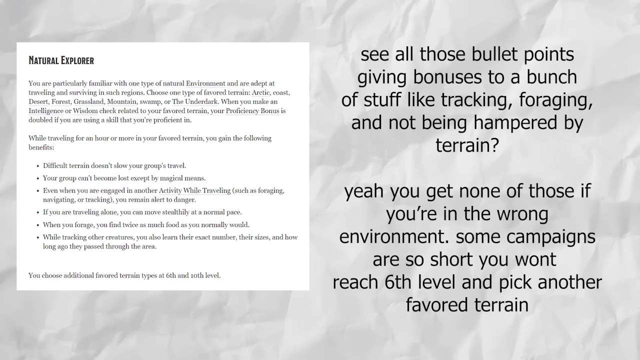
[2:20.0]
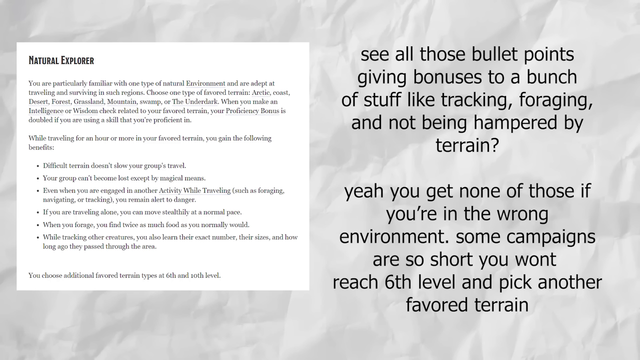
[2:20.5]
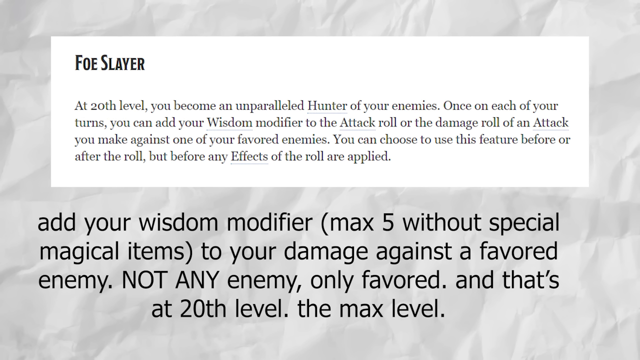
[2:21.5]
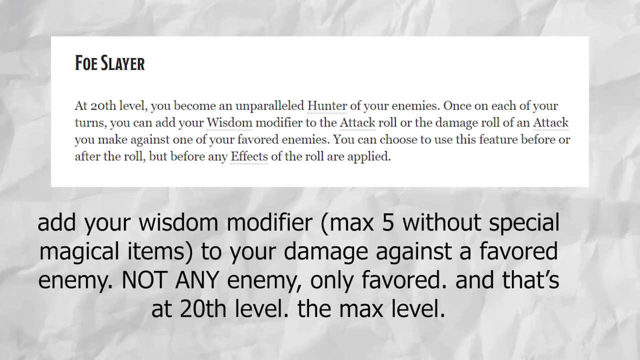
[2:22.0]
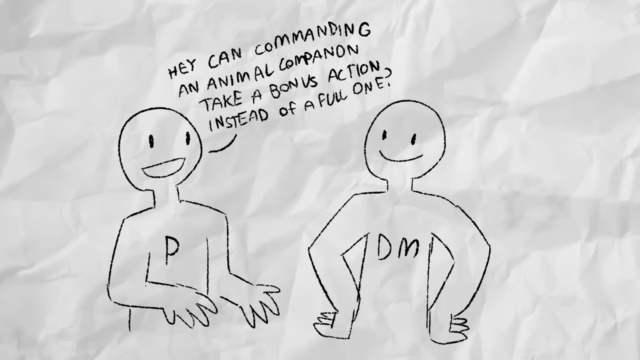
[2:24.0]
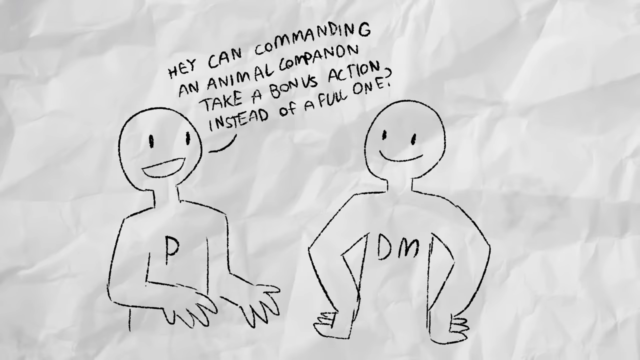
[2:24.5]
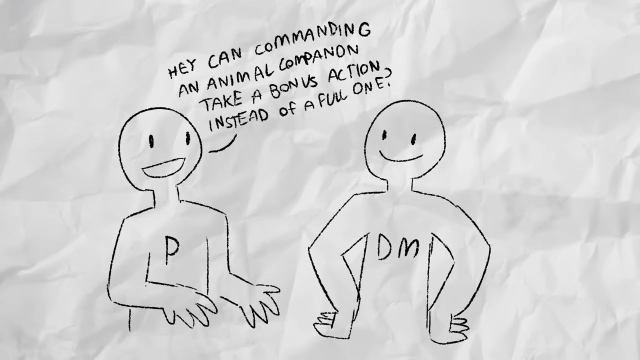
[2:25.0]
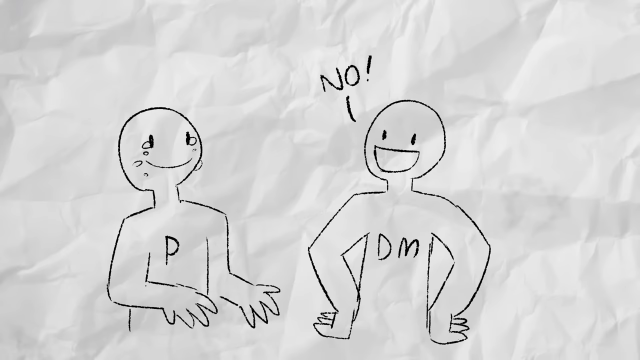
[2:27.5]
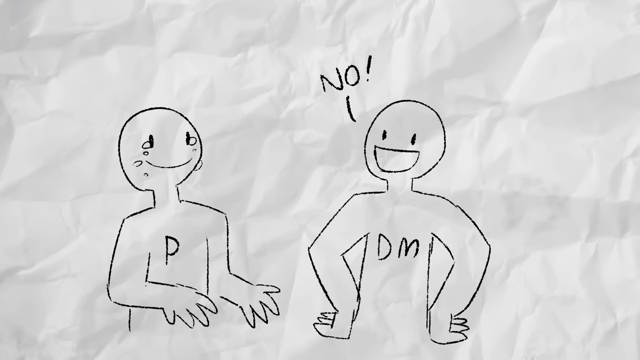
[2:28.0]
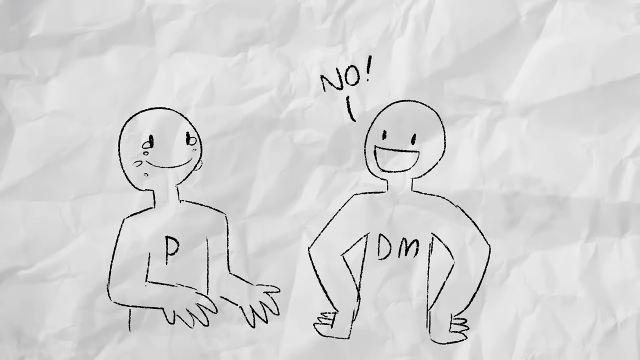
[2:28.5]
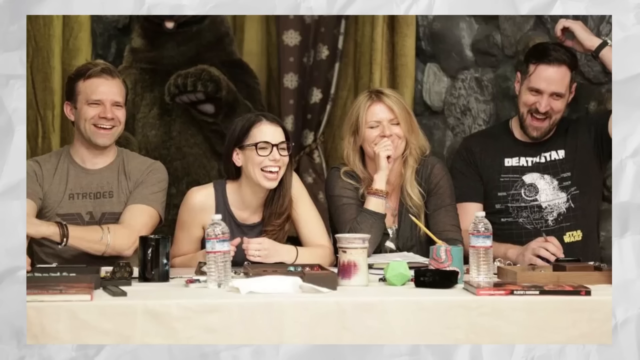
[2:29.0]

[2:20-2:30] A piece of text is displayed, beginning "natural explorer": "You are particularly familiar with one type of natural environment and are adept at traveling and surviving in such regions." It continues "Choose one type of favored terrain" and "When you make an intelligence or wisdom check related to your favored terrain your proficiency bonus is doubled if you're using a skill that you're proficient in." Further lines include "your groups can't become lost except by magical means" and "if you are traveling alone you can move stealthily at a normal pace."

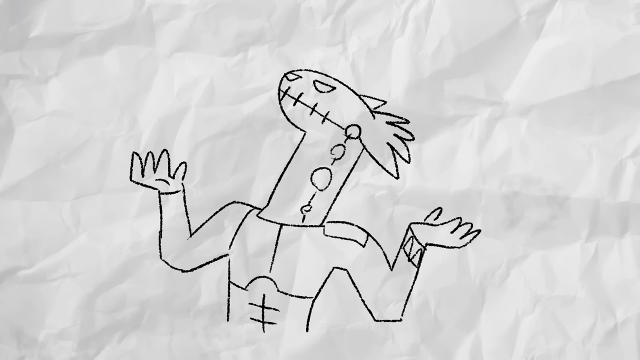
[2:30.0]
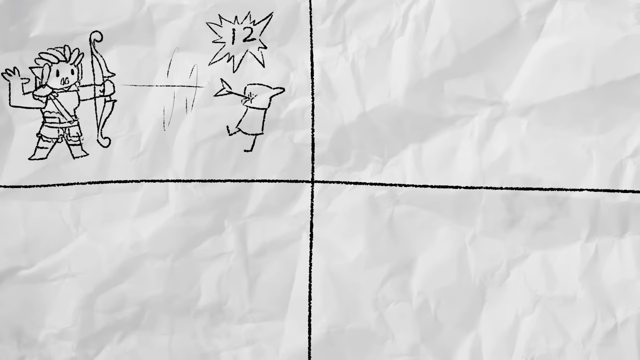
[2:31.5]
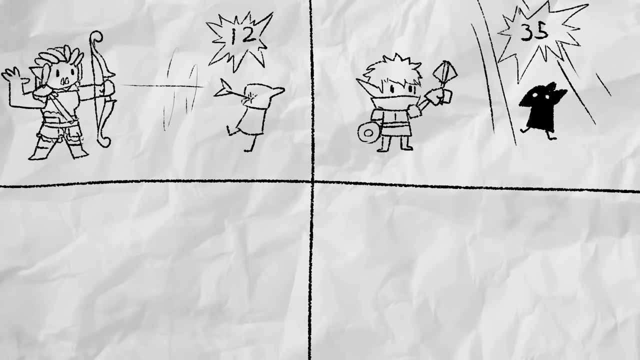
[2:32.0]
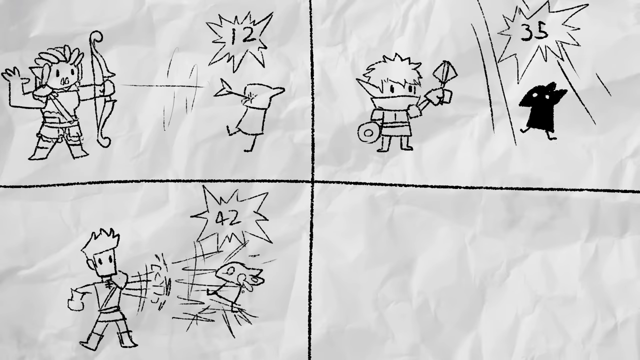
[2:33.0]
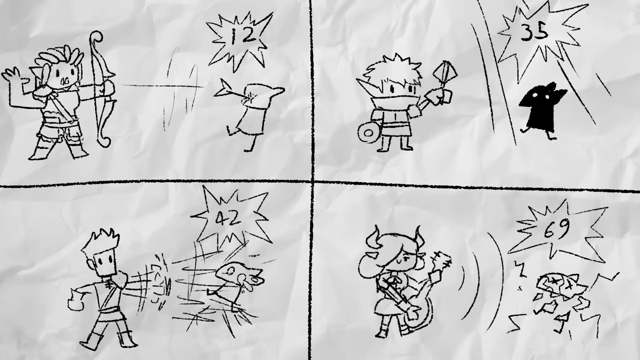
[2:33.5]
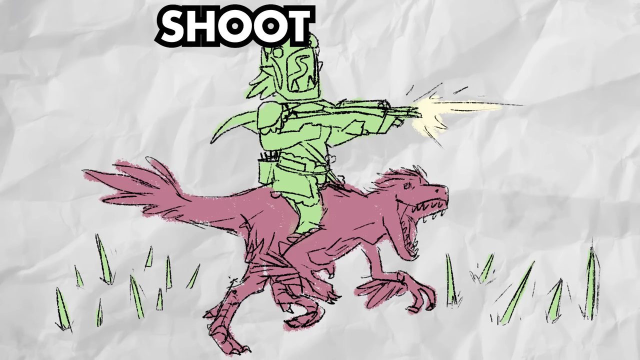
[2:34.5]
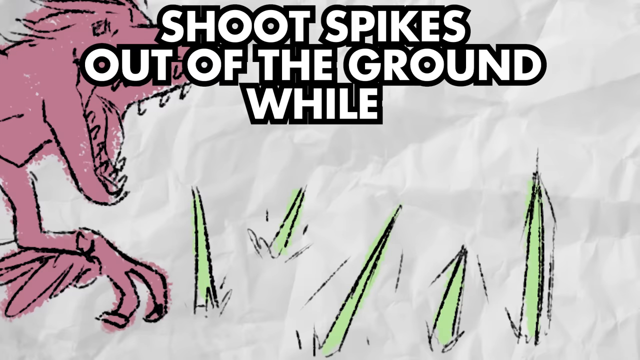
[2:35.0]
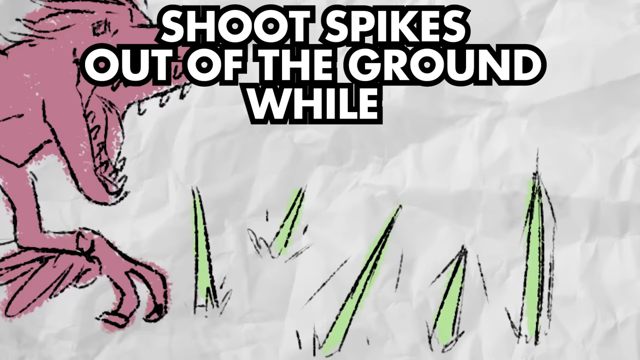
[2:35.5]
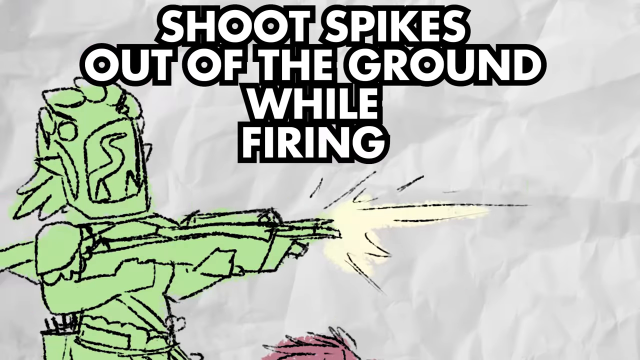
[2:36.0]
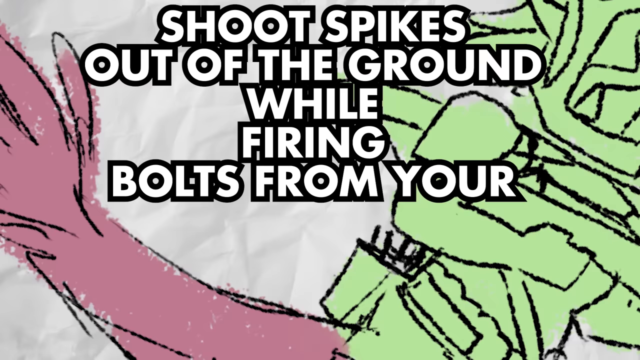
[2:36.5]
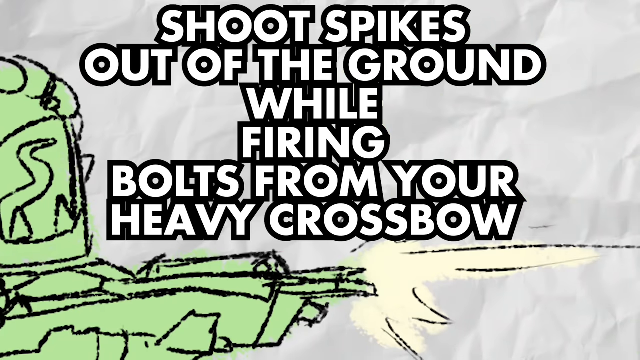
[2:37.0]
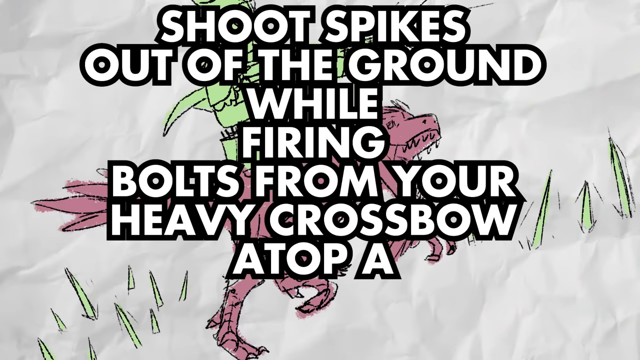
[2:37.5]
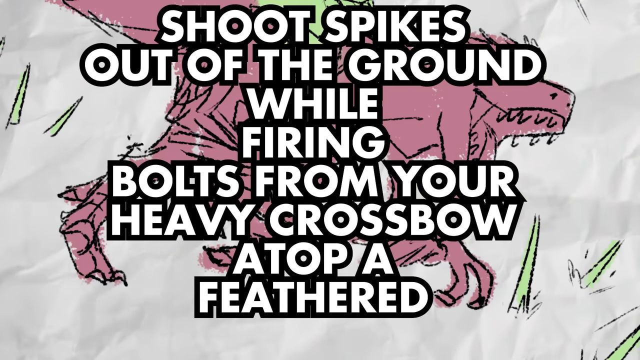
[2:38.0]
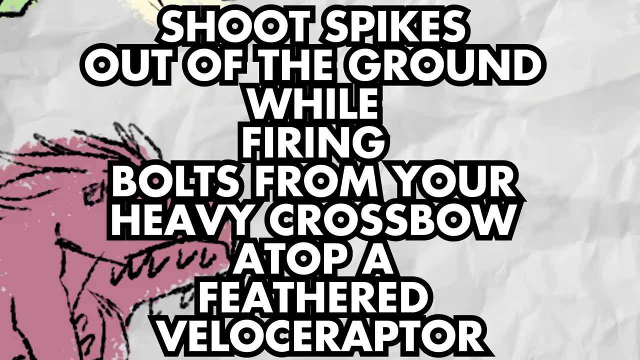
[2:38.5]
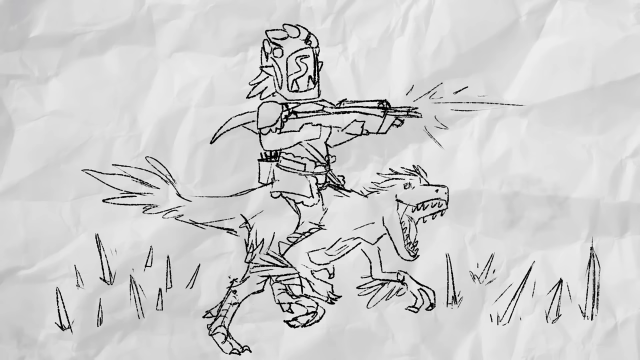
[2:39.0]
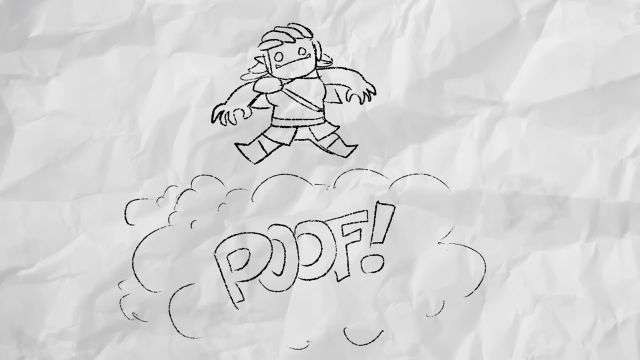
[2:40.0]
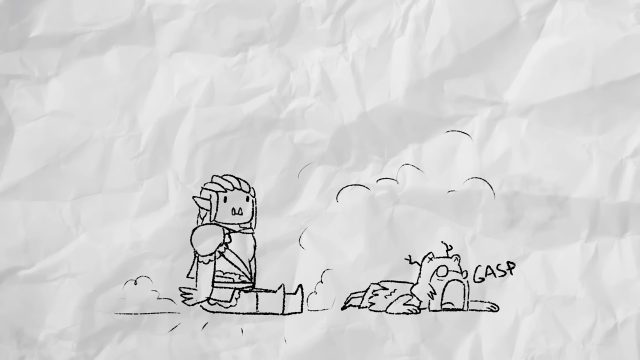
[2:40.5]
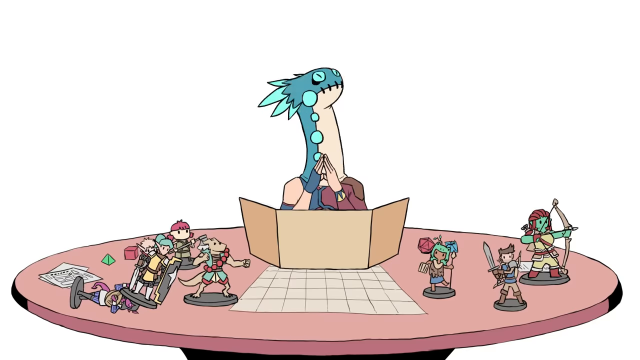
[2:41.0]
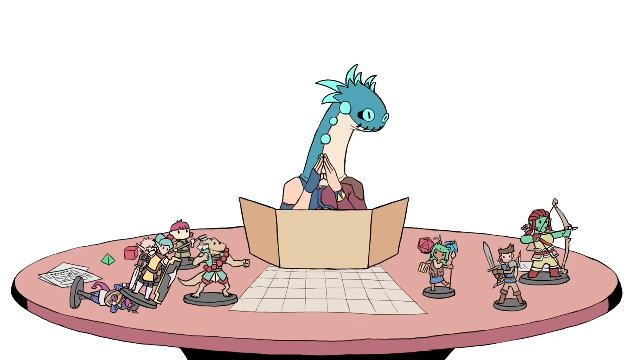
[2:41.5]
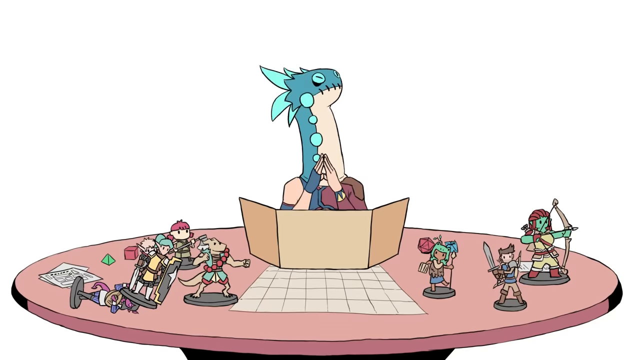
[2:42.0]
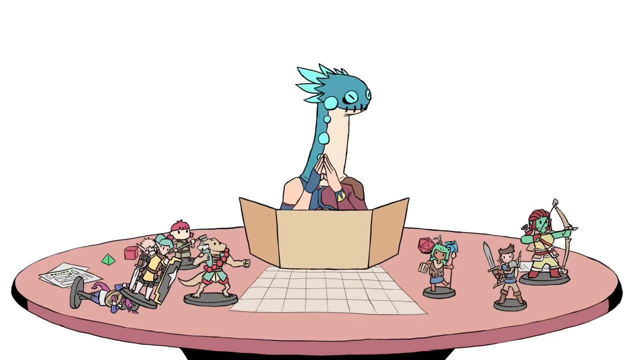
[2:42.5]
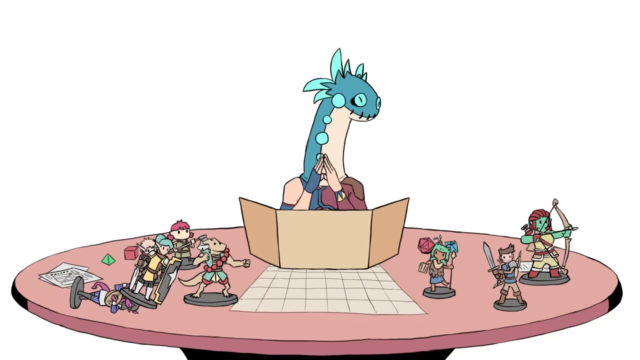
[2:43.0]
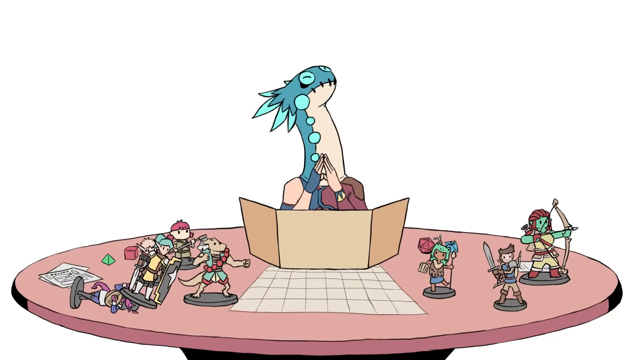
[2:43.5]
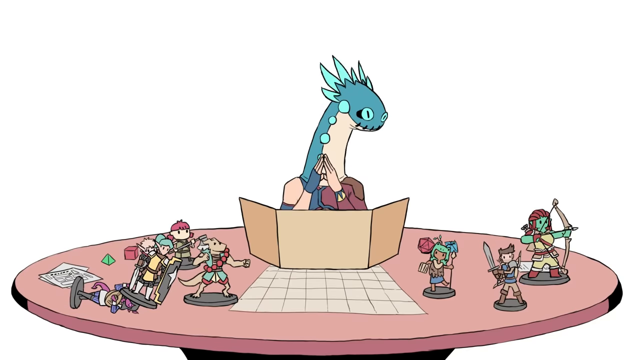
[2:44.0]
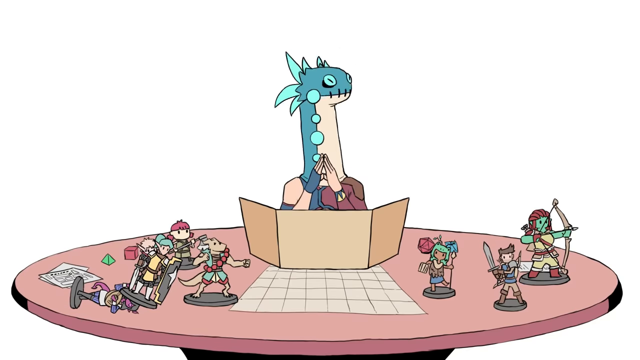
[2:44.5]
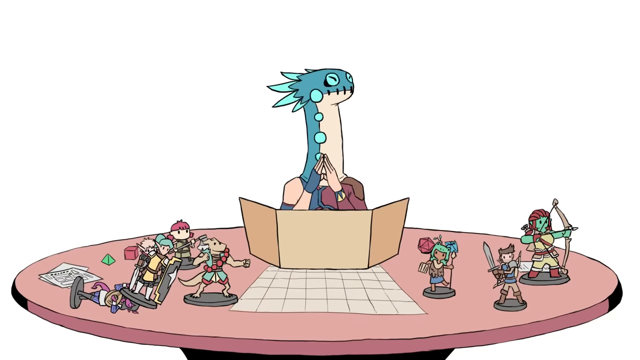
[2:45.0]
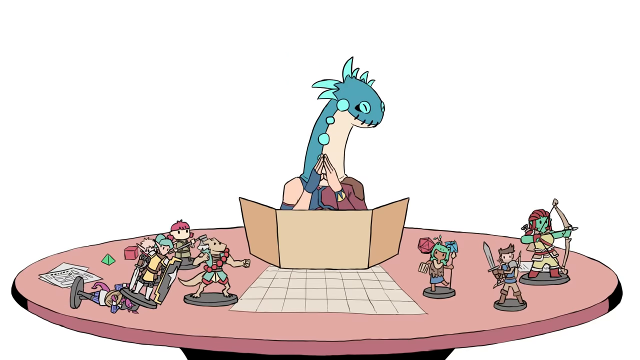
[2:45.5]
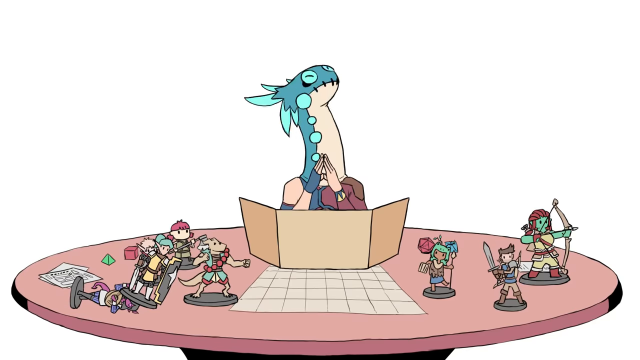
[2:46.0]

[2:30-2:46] A lizard person looks up in the air. Four squares separated by two lines are then shown: at the top left, somebody shoots a bow and arrow and hits a target, with "12"; at the top right, somebody summons something, with "35" and a star; at the bottom left, somebody is attacked, with "42," and somebody punches somebody; and at the bottom right, somebody plays a guitar, with "69" and a star, and he is killing somebody. Then somebody is riding some type of dinosaur, and it says "shoot." The dinosaur they are riding is shown in red with its teeth visible, and text reads "shoot spikes out of the ground while firing bolts" and "atop a feathered velociraptor." The velociraptor disappears from under the rider and it says "move." Somebody is laying on the ground and it says "gasp."